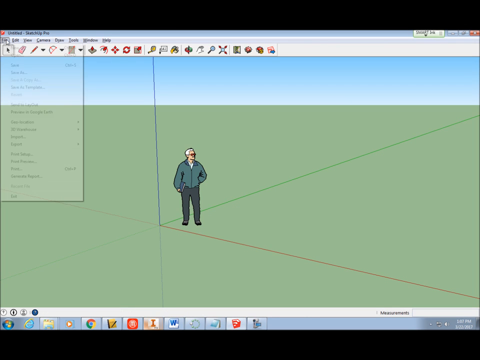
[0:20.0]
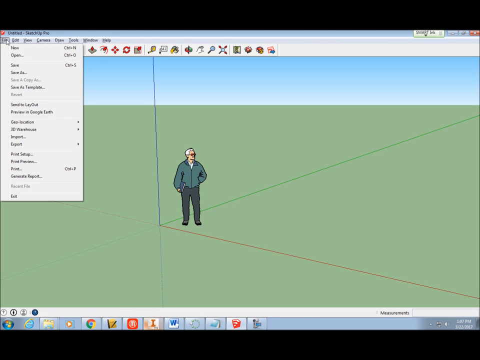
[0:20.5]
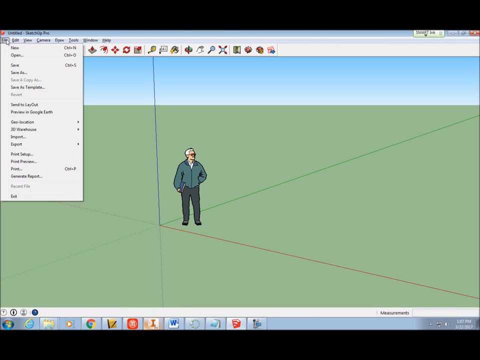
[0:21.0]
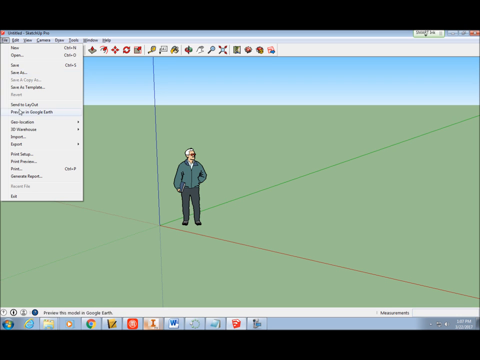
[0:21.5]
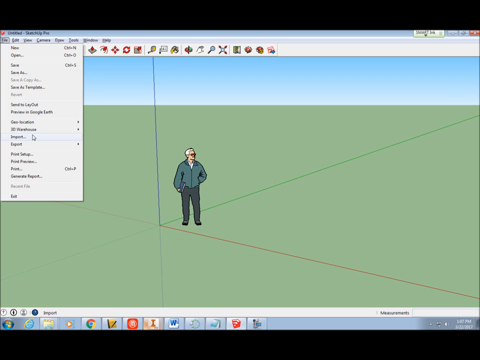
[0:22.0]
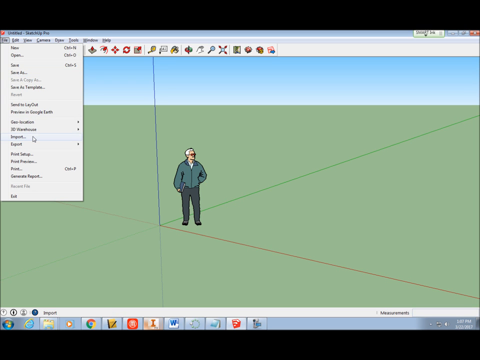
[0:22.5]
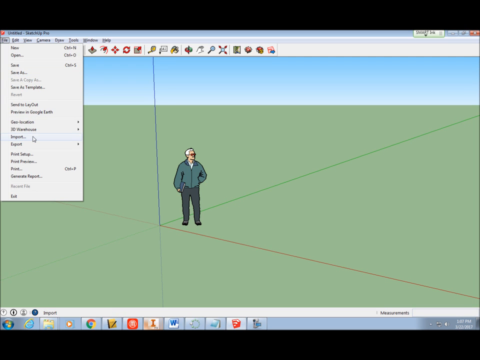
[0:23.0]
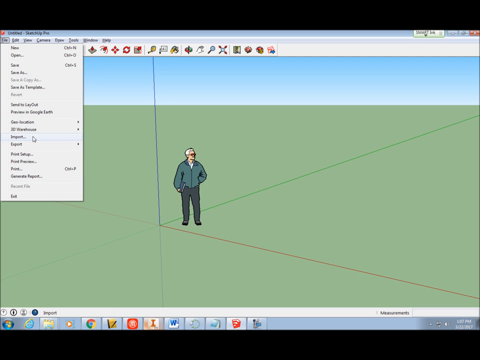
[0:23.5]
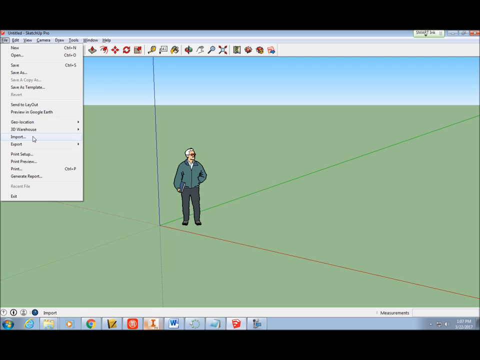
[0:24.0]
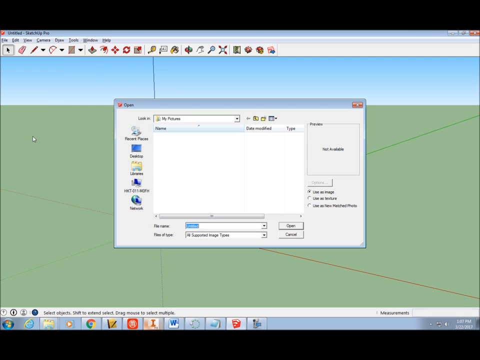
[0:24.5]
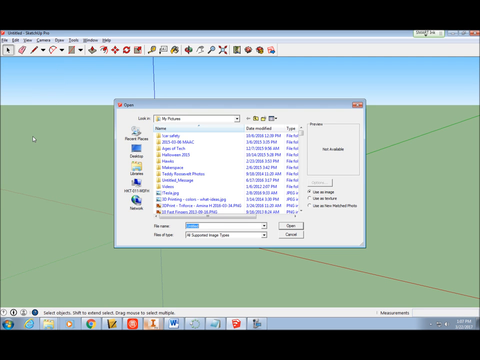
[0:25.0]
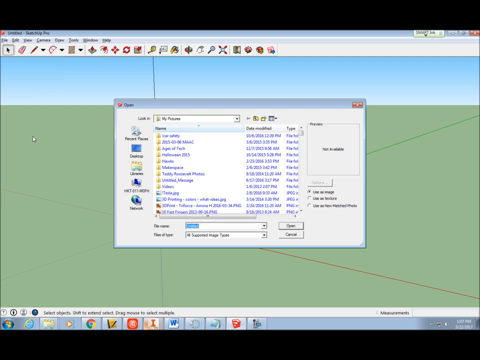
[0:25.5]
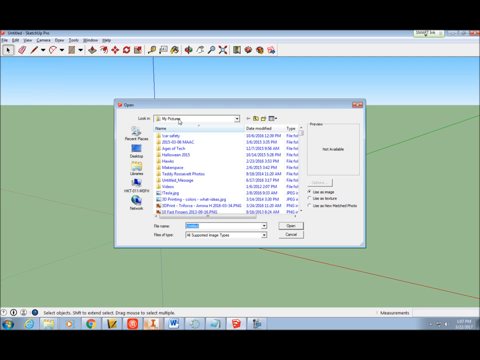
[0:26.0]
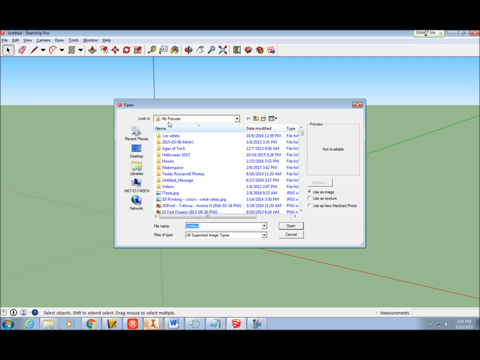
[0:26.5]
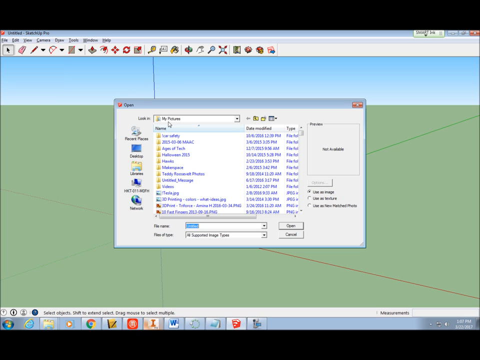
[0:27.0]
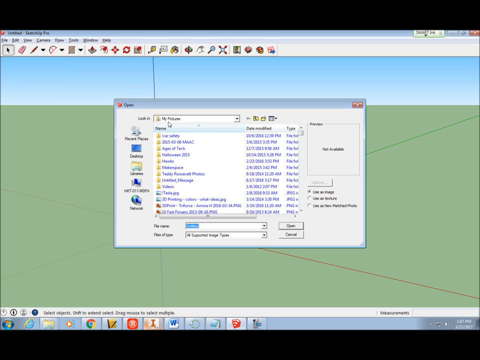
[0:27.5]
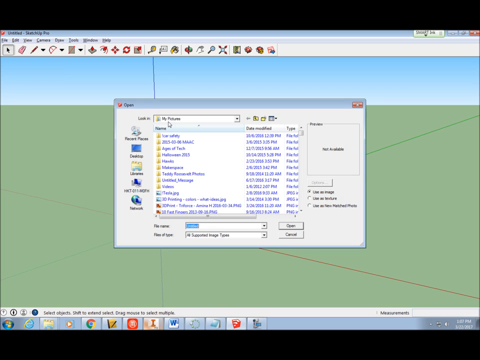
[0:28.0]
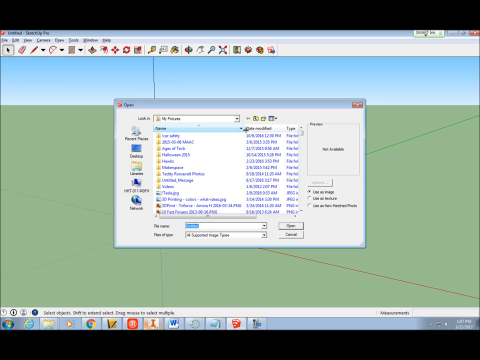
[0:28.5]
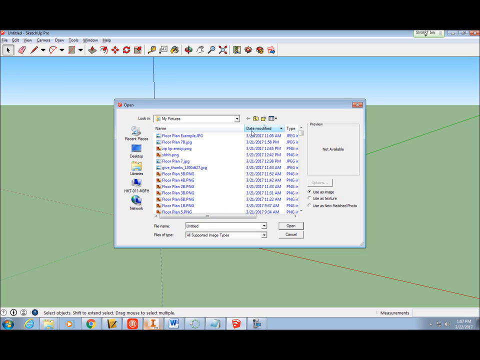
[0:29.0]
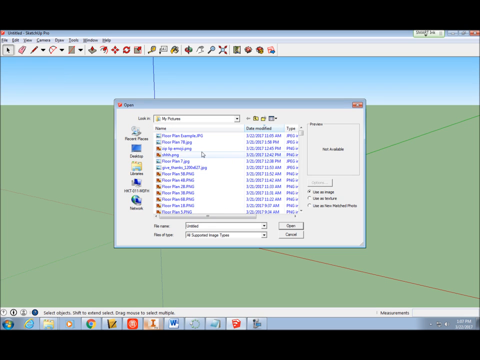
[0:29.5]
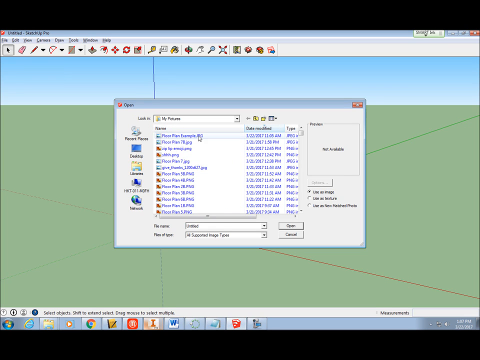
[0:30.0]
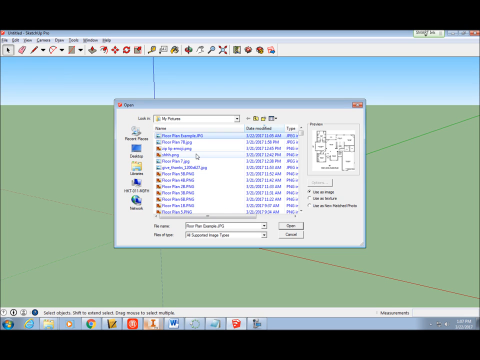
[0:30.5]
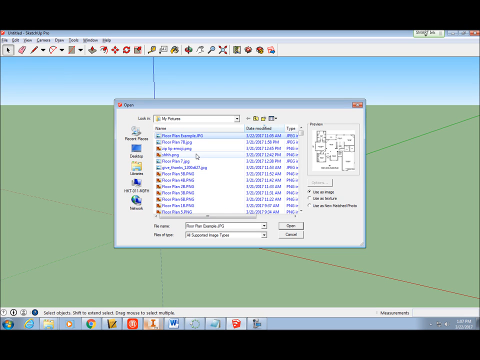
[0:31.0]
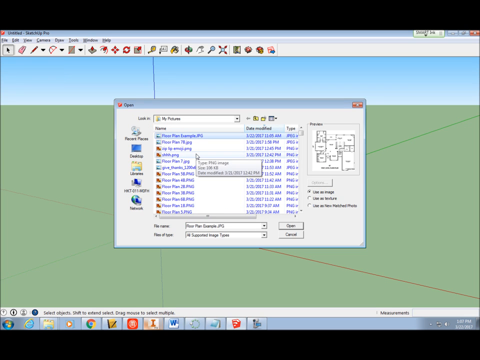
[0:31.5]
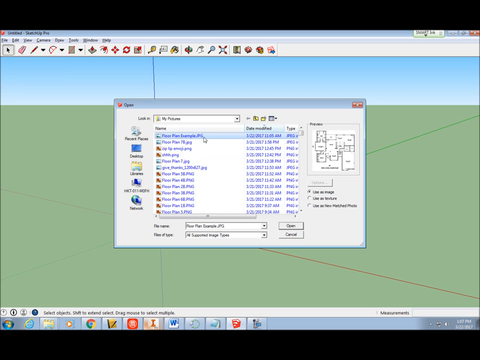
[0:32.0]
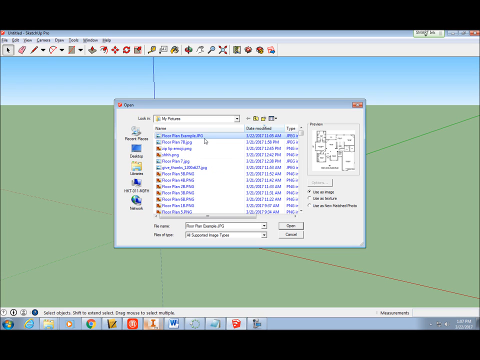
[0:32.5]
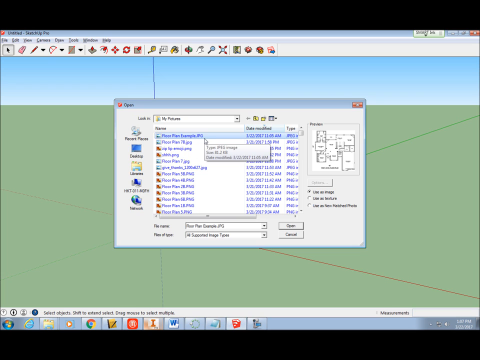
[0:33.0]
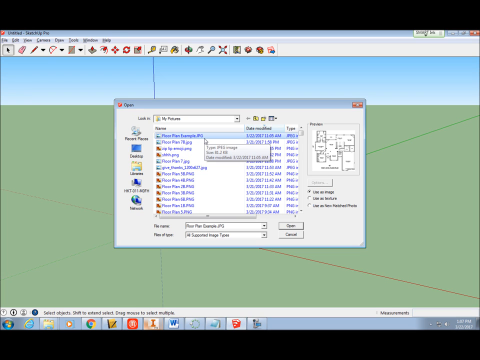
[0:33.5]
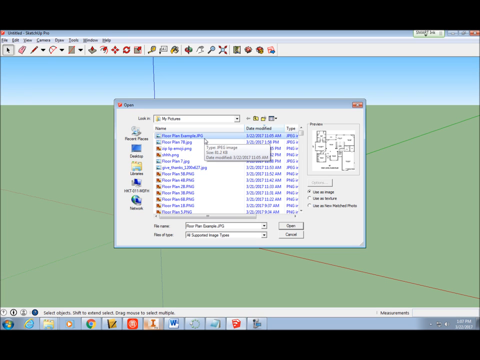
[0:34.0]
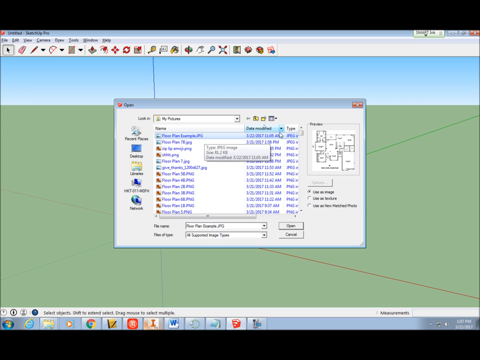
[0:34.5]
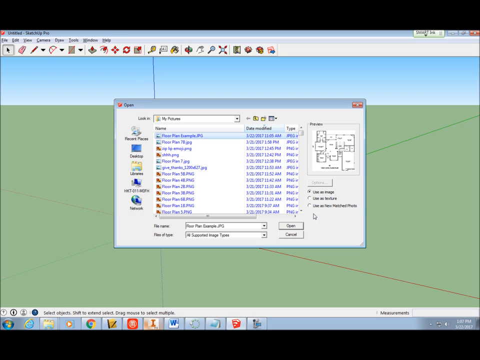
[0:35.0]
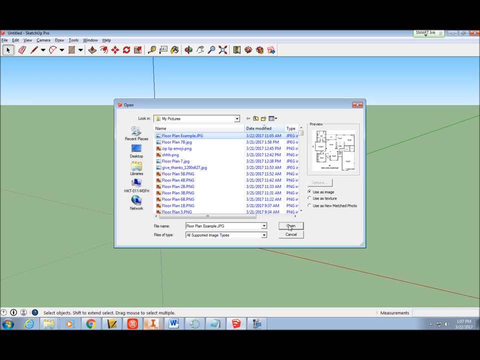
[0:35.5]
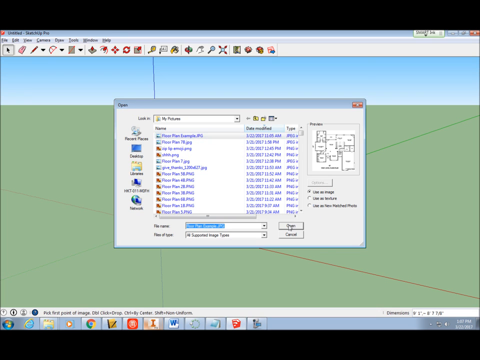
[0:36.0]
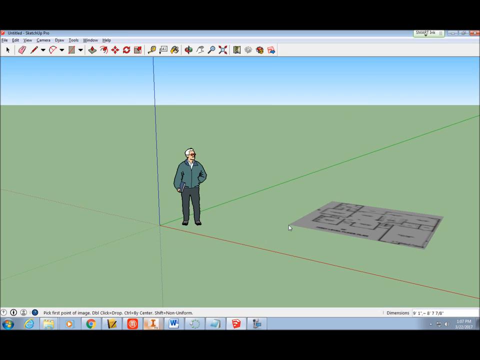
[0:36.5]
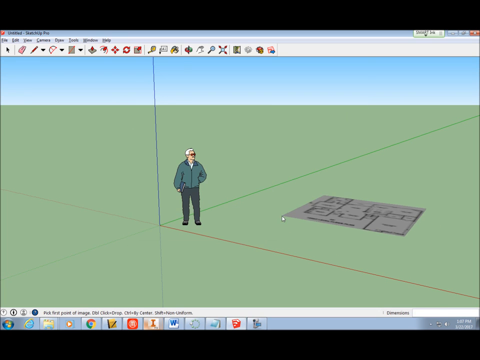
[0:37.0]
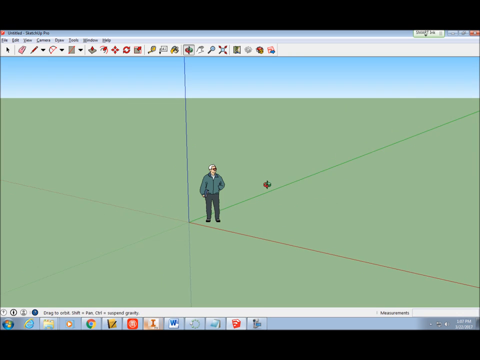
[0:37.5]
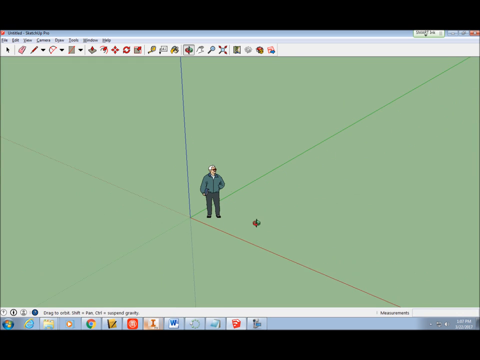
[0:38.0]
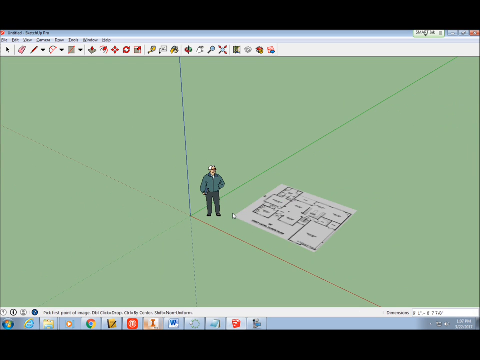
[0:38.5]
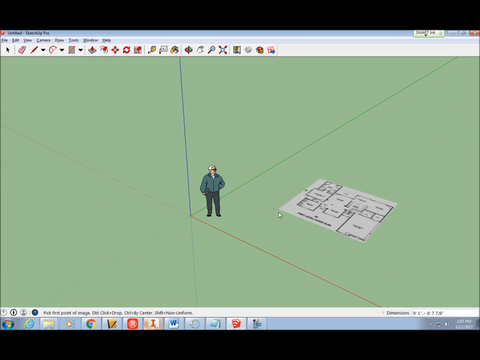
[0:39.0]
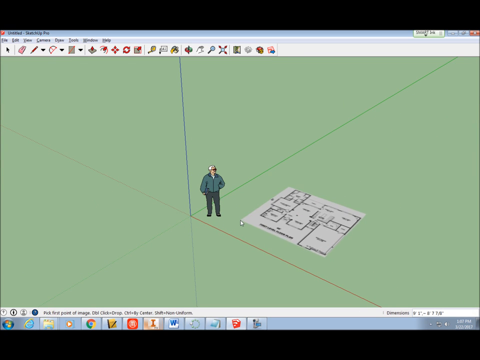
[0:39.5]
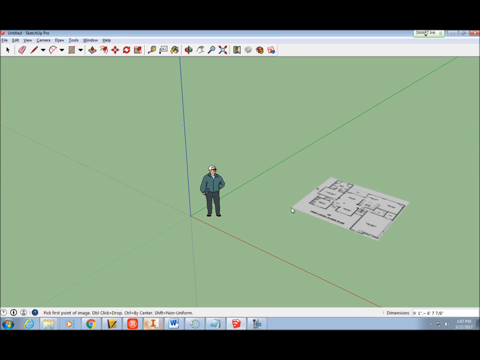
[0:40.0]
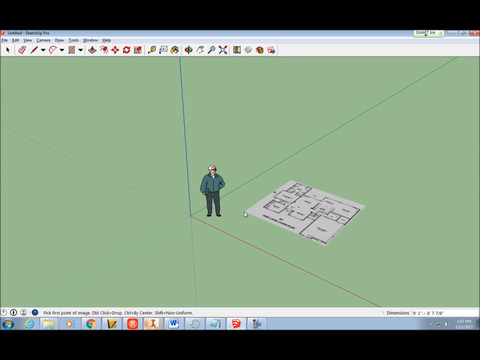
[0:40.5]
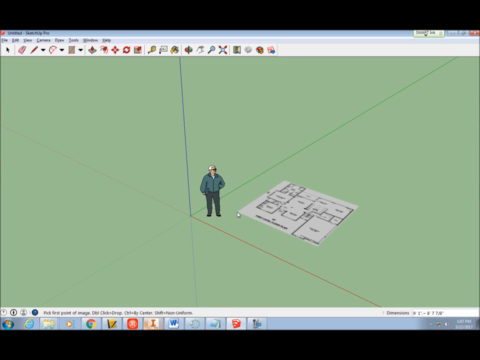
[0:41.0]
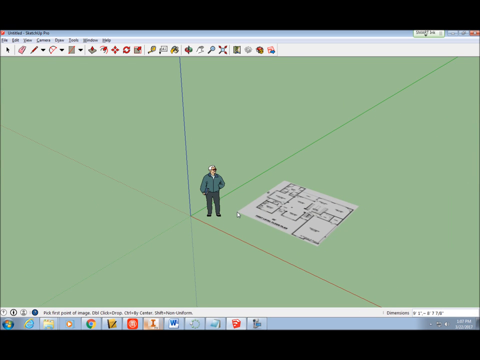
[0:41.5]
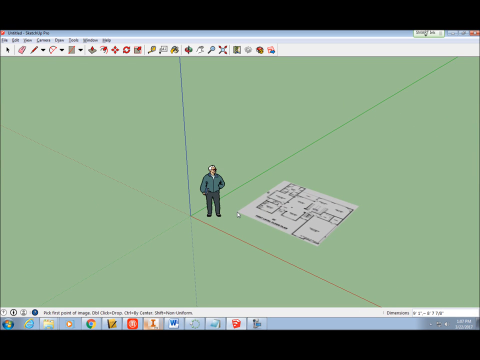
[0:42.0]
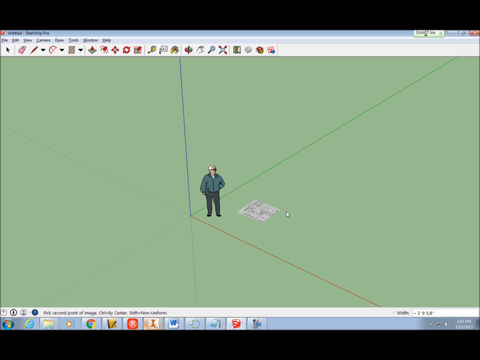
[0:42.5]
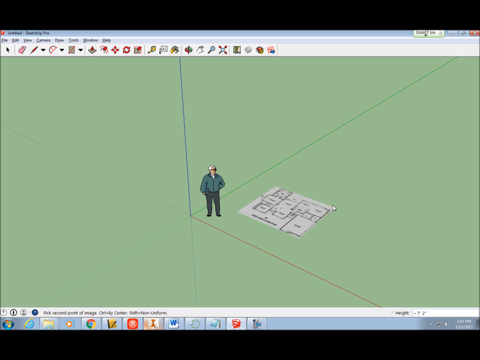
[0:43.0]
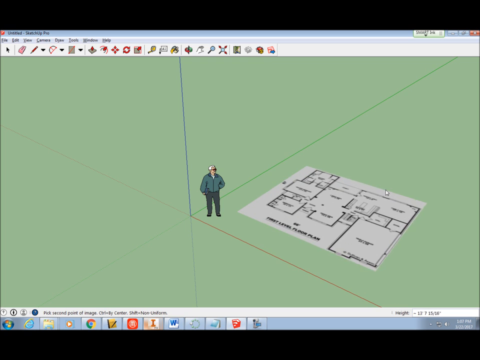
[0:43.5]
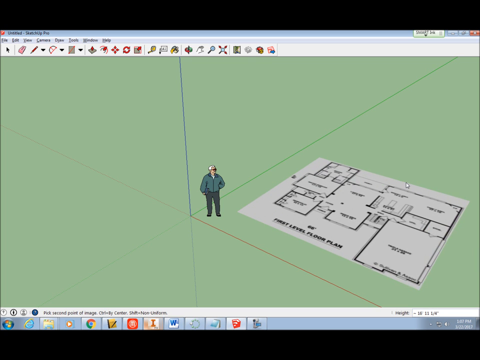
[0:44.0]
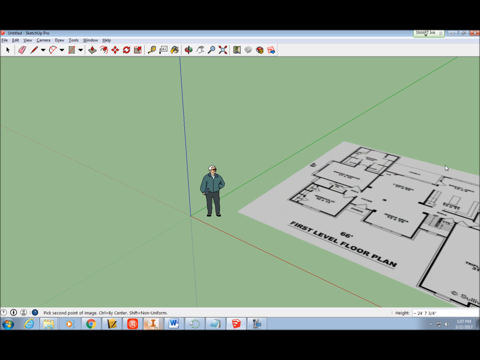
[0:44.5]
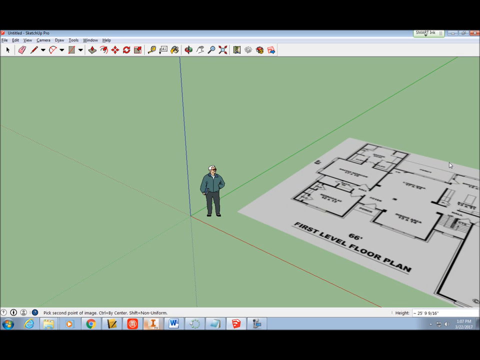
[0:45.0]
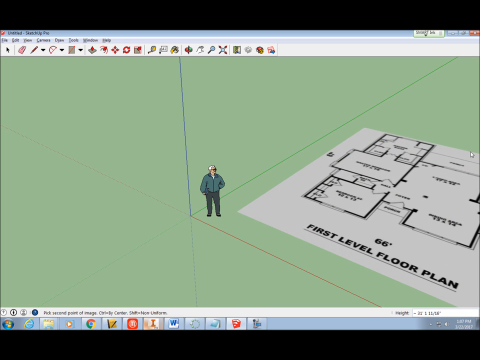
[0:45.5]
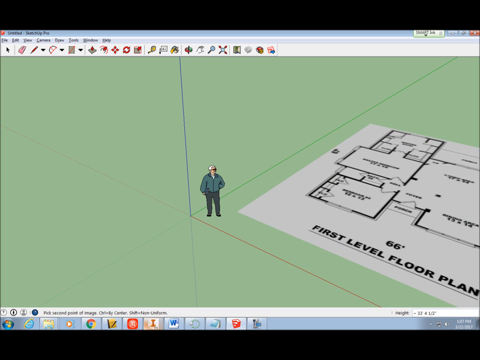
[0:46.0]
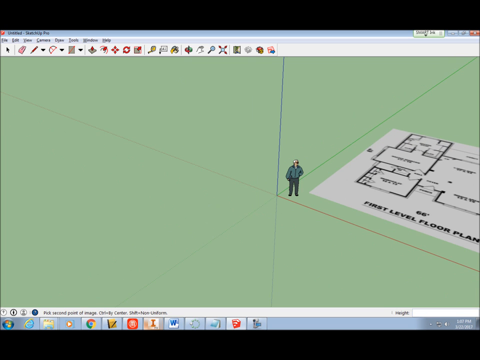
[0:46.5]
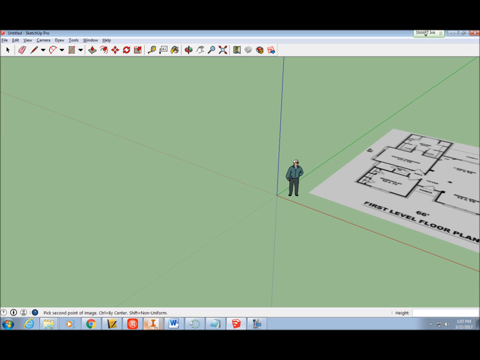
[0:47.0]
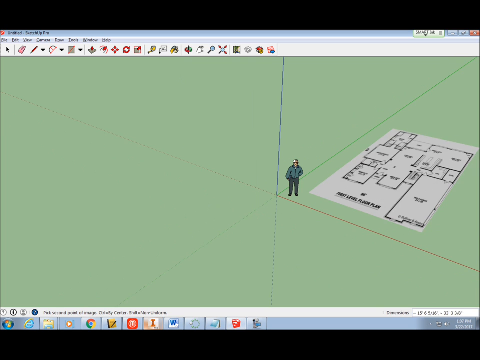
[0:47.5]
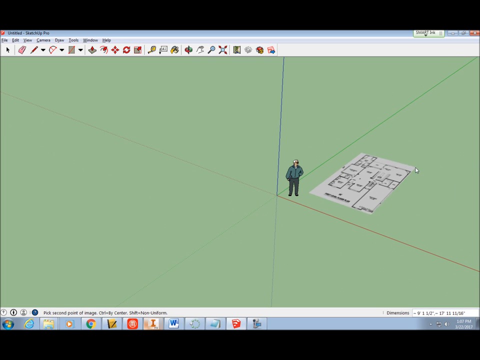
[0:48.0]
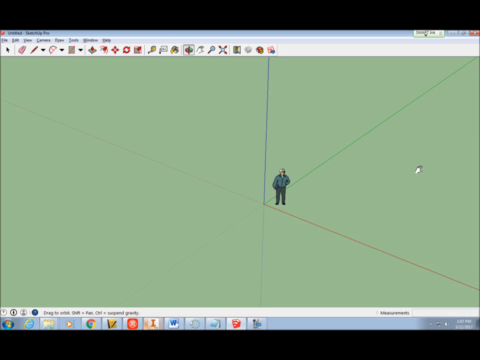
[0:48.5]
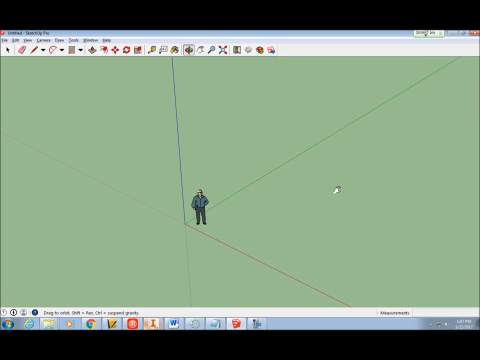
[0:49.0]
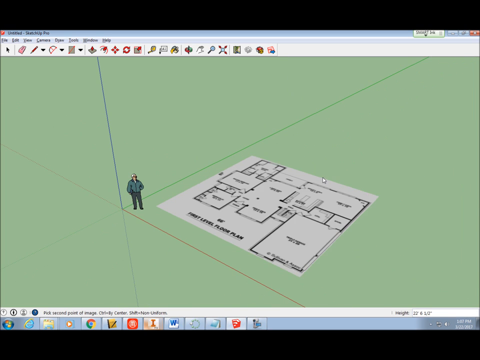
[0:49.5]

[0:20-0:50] The user apparently opens a dialog box, seemingly to bring in the downloaded image. The page with the man and the three lines, blue, green and red, is shown. The person wears a green jacket and grey or black trousers, has grey or white hair, and wears spectacles. The user then pastes or imports the saved image, the first level floor plan, and tries to enlarge it.